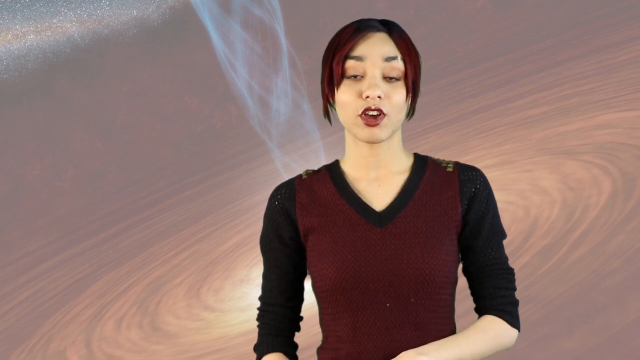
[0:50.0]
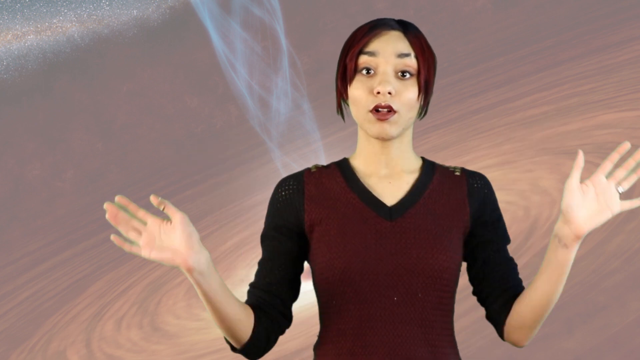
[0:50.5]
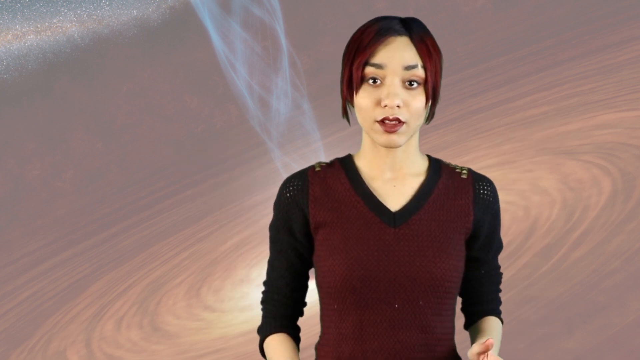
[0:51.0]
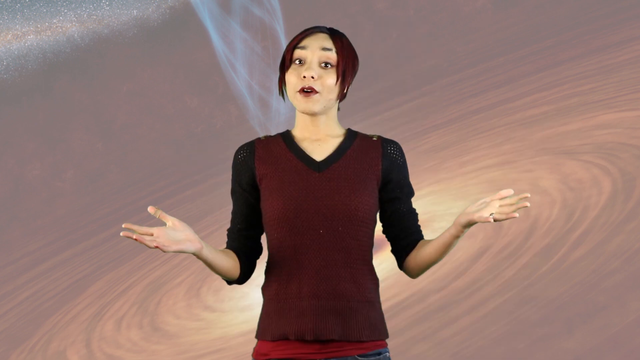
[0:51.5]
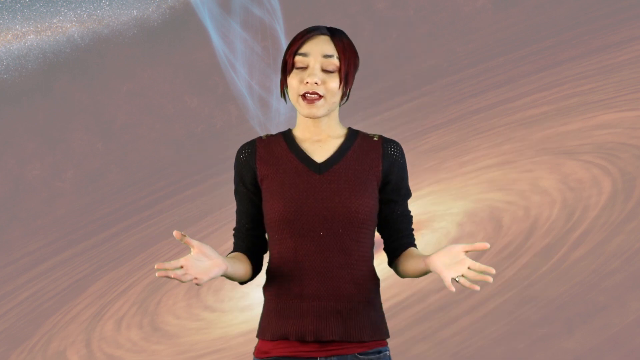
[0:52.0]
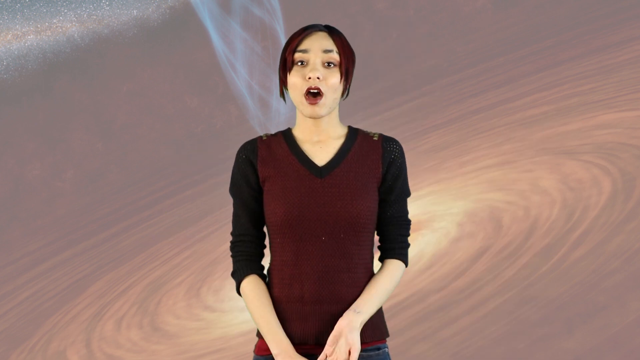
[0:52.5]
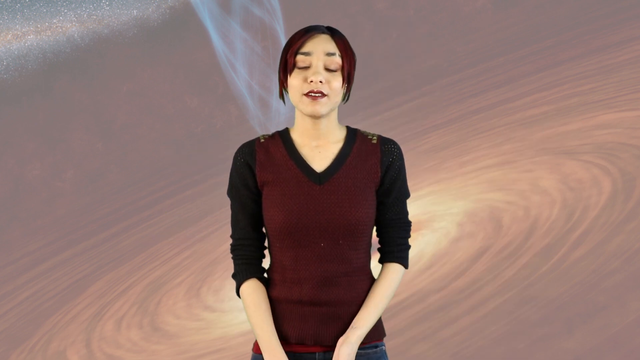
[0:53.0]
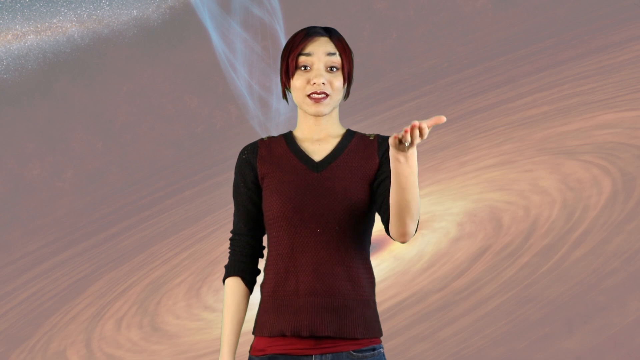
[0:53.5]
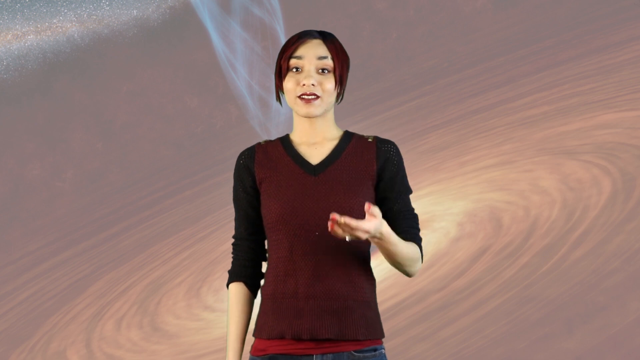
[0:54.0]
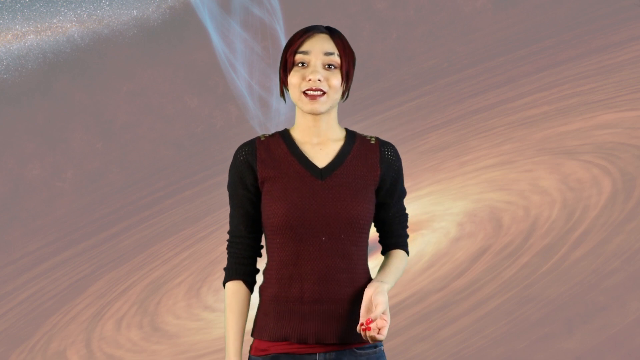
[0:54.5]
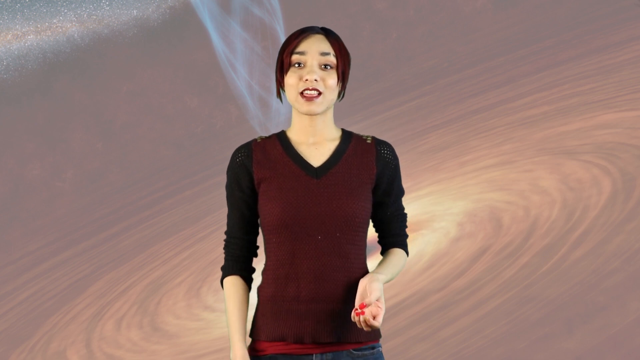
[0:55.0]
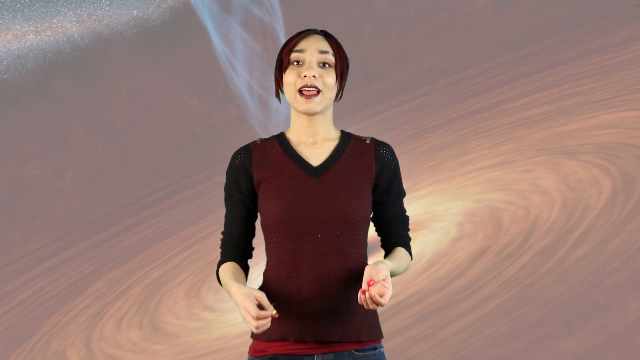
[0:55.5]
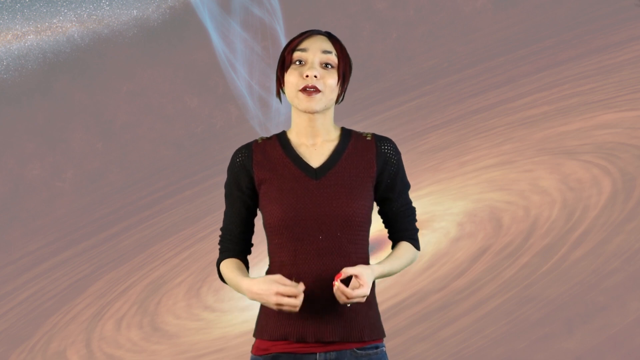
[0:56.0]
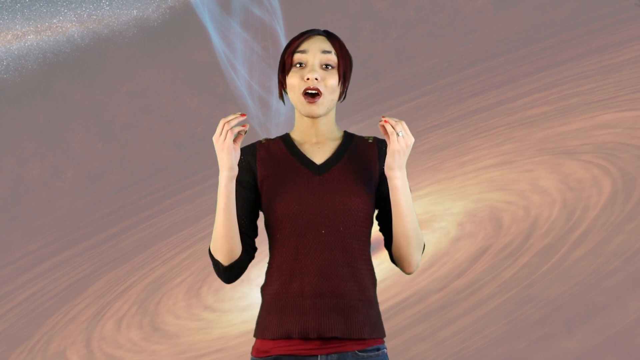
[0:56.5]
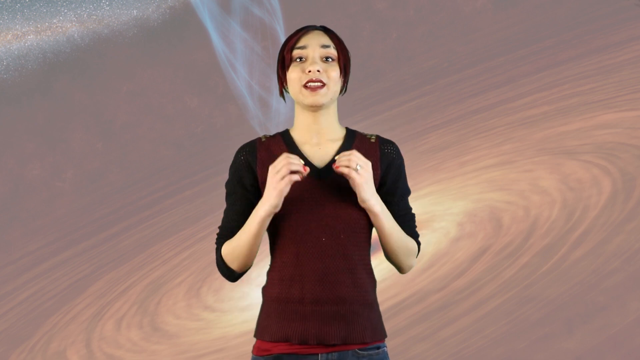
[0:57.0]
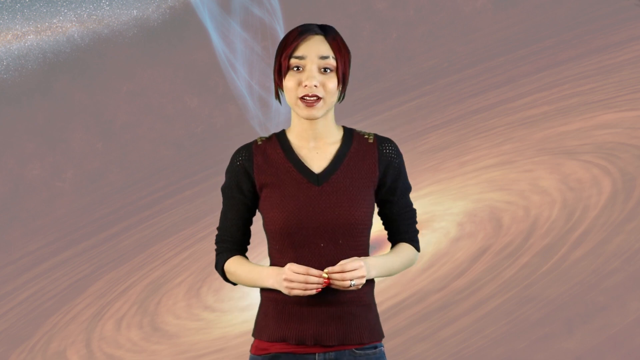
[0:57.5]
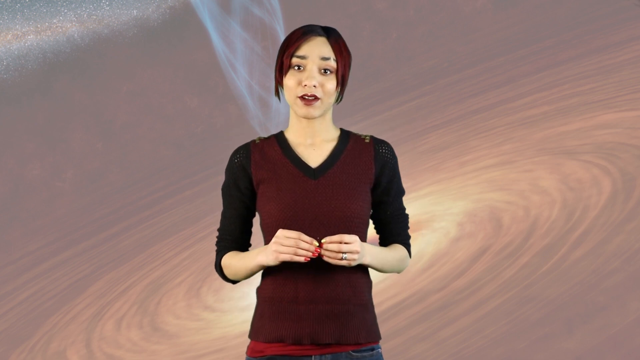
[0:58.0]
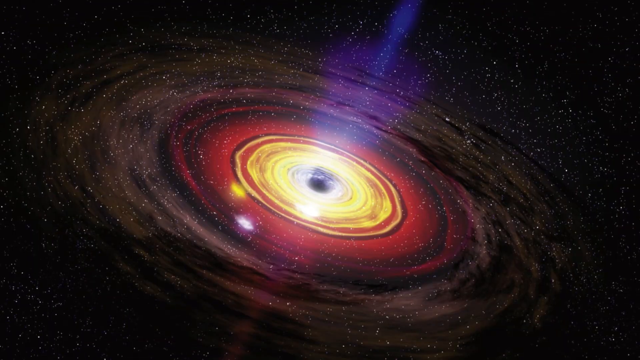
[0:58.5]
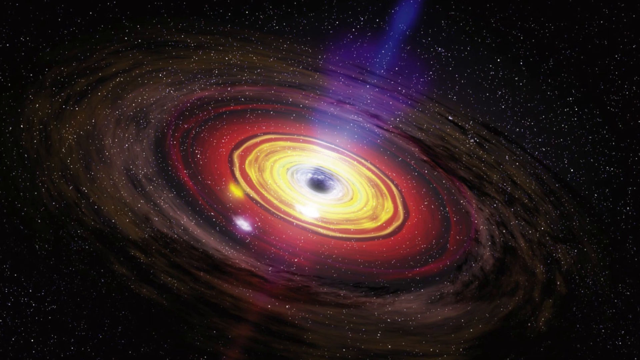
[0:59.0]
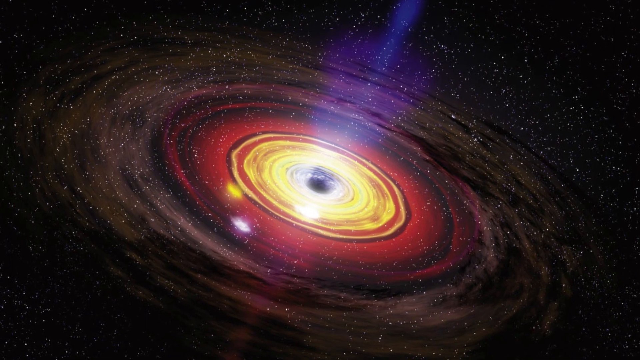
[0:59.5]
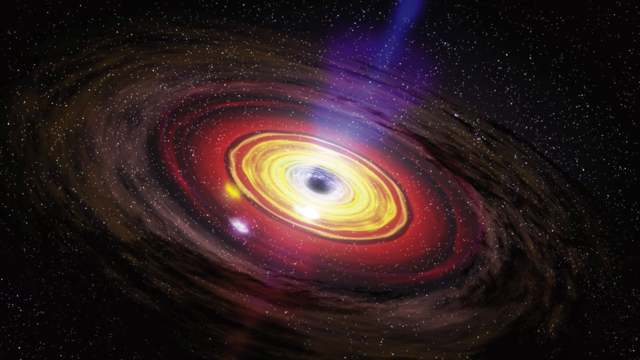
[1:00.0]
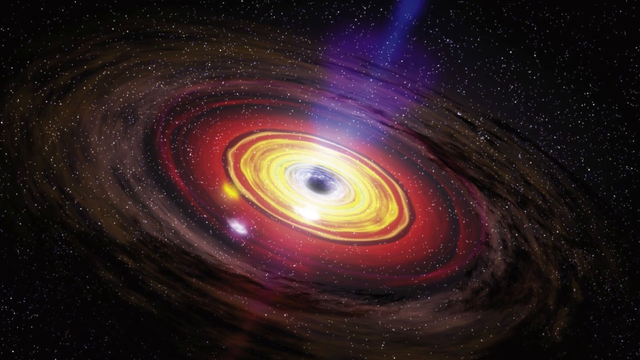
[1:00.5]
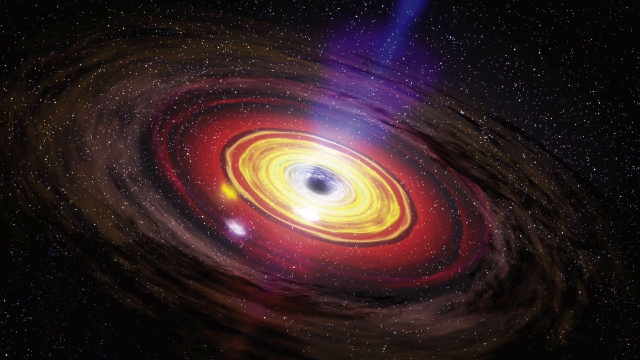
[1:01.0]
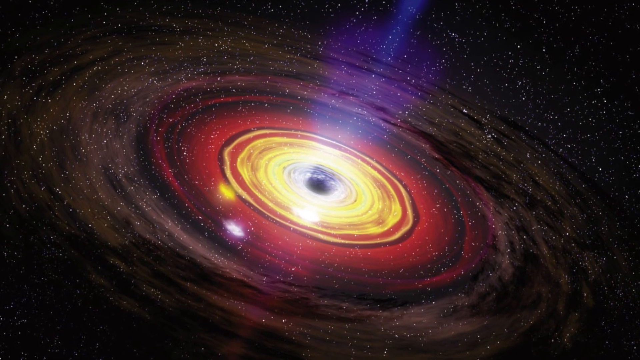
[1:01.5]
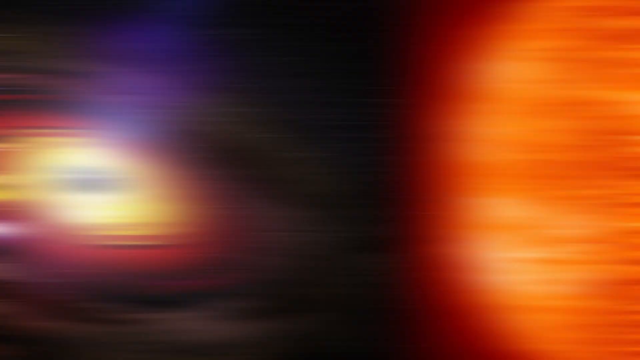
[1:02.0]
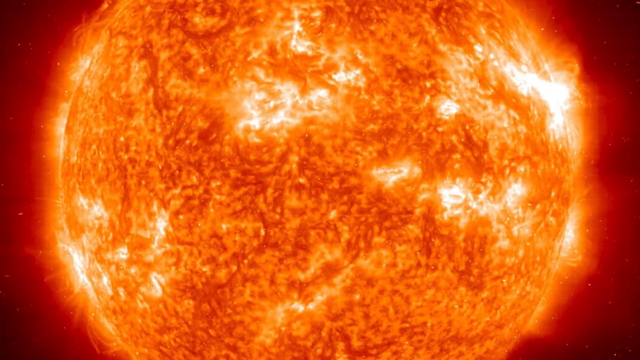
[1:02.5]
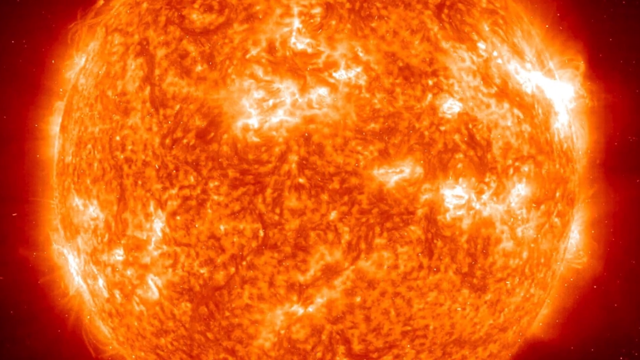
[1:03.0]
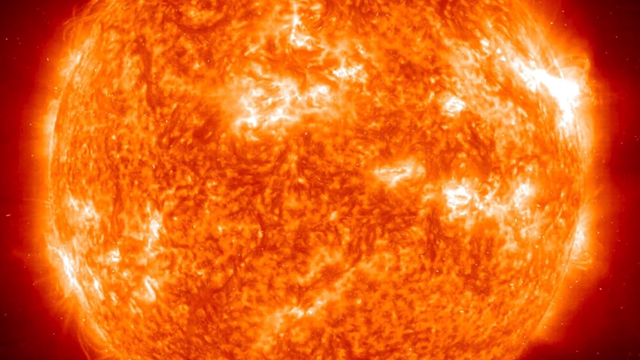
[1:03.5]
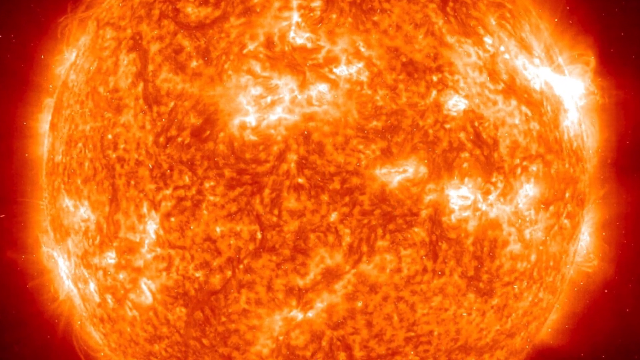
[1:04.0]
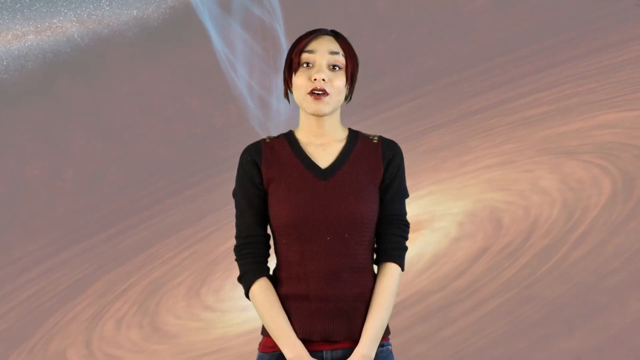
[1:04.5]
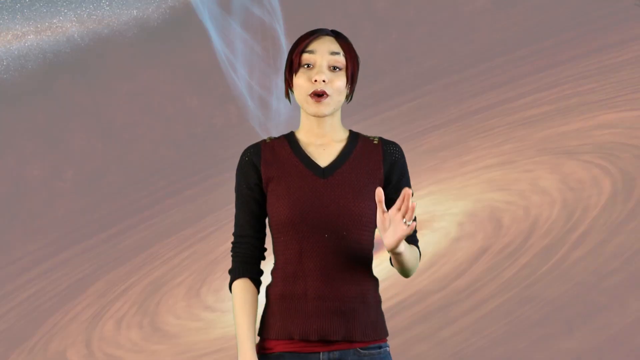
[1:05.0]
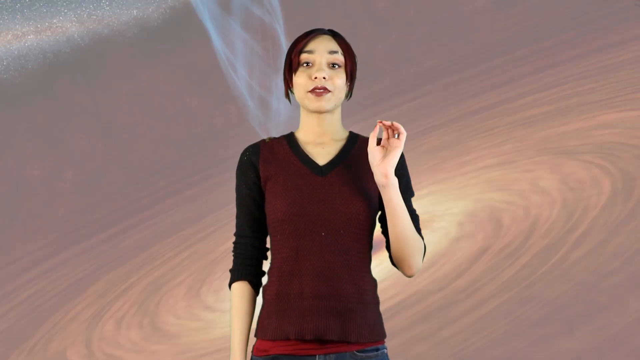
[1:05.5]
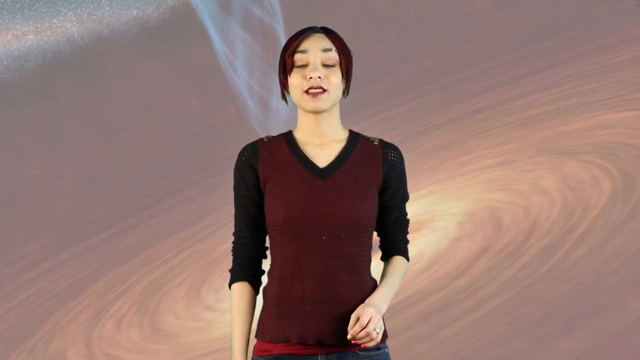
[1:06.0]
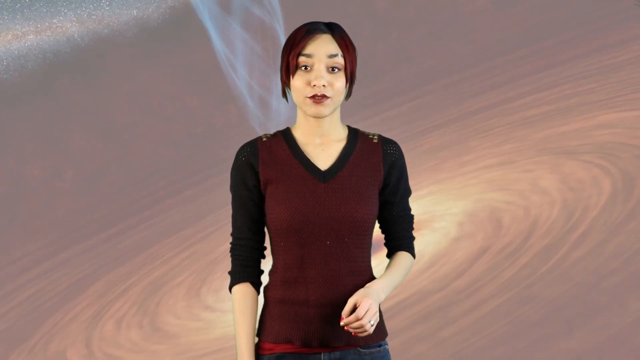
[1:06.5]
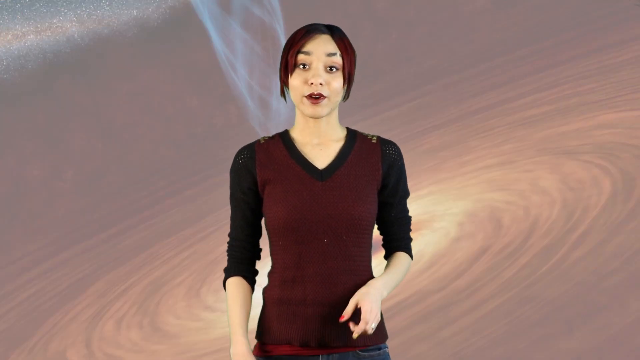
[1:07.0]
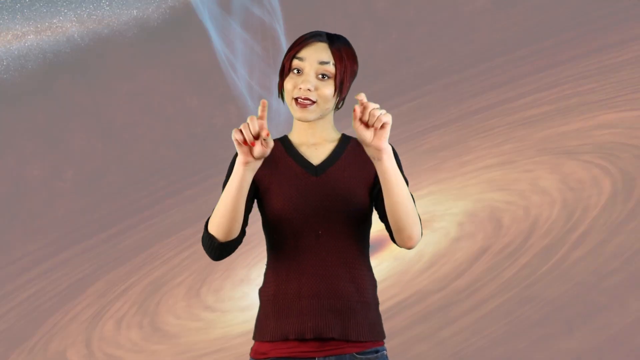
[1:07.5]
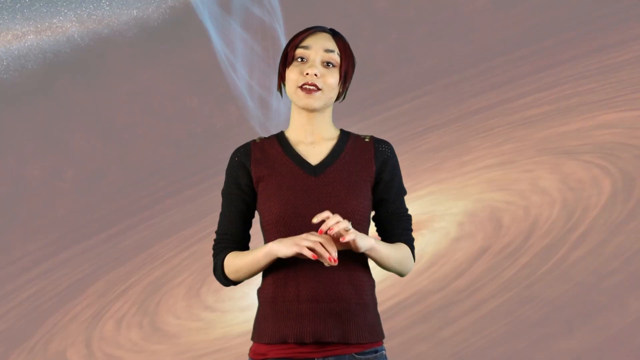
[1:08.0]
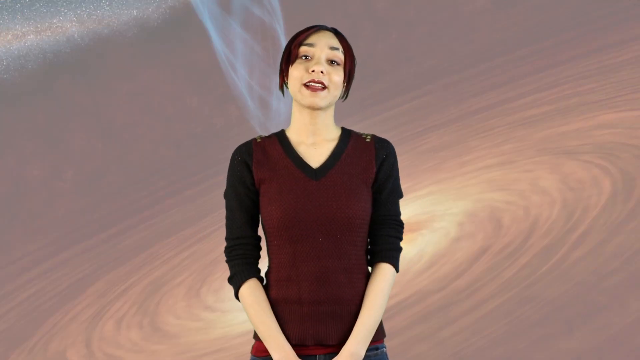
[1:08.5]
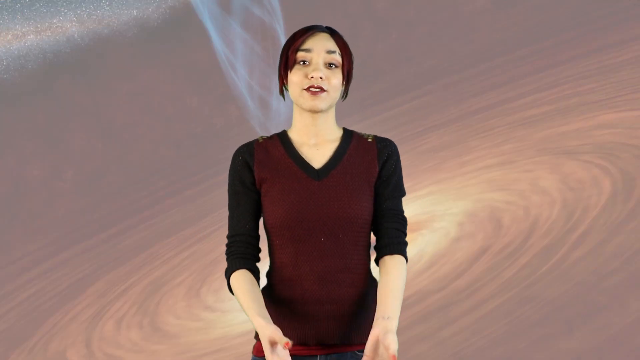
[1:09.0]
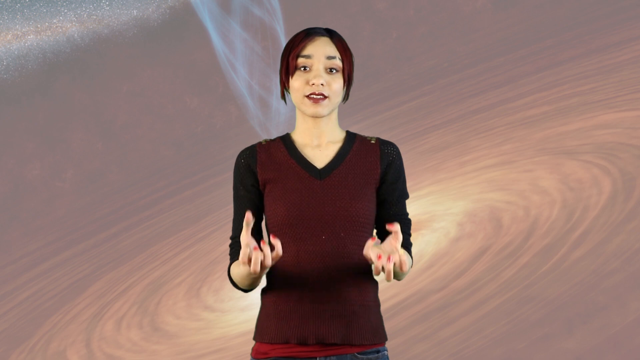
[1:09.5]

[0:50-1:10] She is still right of center, talking. She waves her hands up from the bottom and out, clasps her shoulders, and brings them back down, then kind of tilts her head back, looking straight ahead. In the wider shot she is in the middle; her arms go out to the sides and come back down in front of her together. Her right hand rises, palm up, then both hands are waist high with fingers up and touching, and she brings them up to about her shoulders as she talks. She kind of moves her lower body forward, exaggerating a point, with her head slightly tilted to the right, then holds her hands in front of her at about waist height with the fingertips touching. The video goes to the galaxy look, with a blue light coming down at the top, a little to the right, yellow, red and orange circled around it, and darkness on the sides for space with little dots for lights, as the view slowly zooms in. Next comes a bright burning sun, mostly orange with a little yellow and red on the outer edges, as the view slowly zooms in. Back to her talking, she moves her right arm up and down, brings both arms up, touches her fingers together, moves them out to the sides and drops them, then brings them up with the fingers pointing up as if grabbing something, moves them up, and brings them down to her waist again.